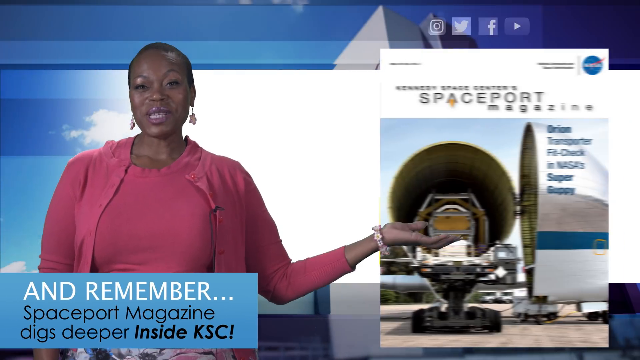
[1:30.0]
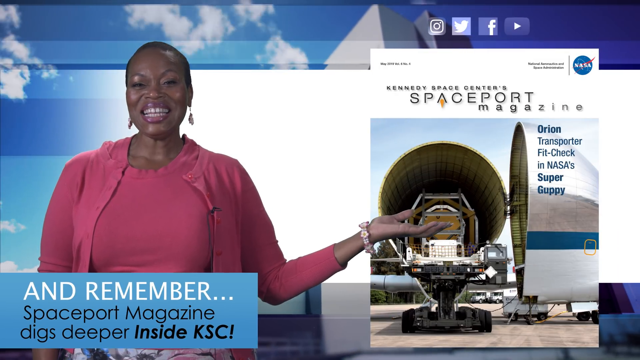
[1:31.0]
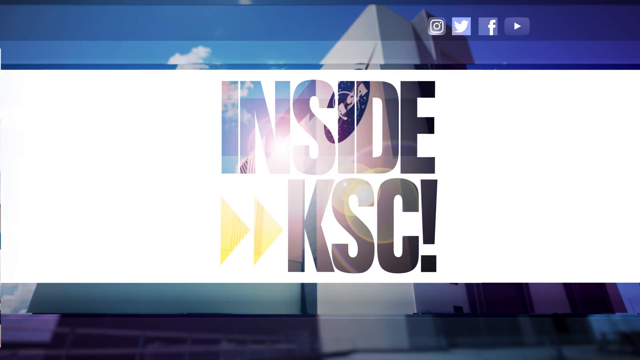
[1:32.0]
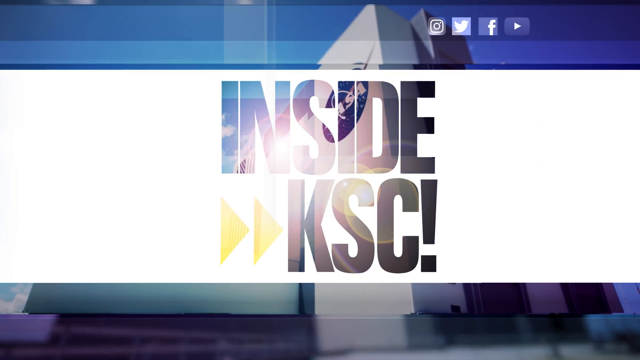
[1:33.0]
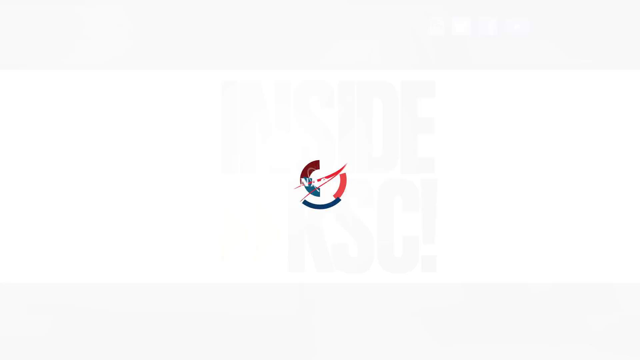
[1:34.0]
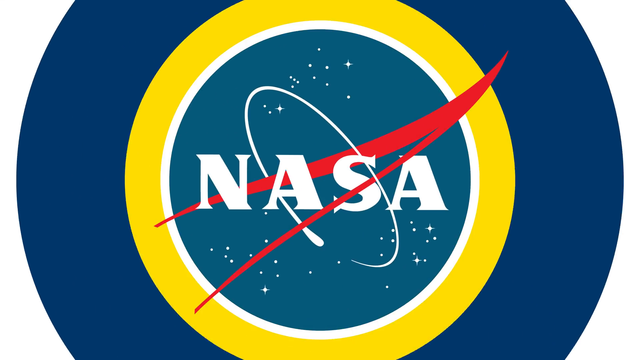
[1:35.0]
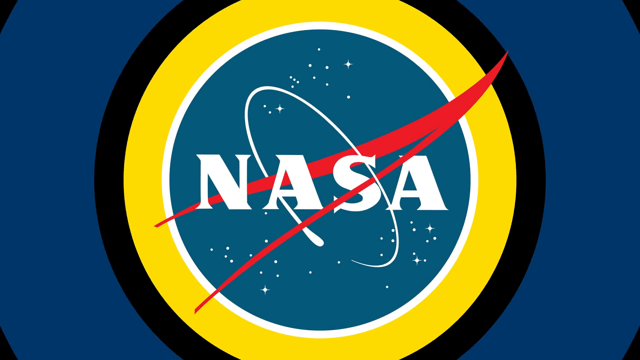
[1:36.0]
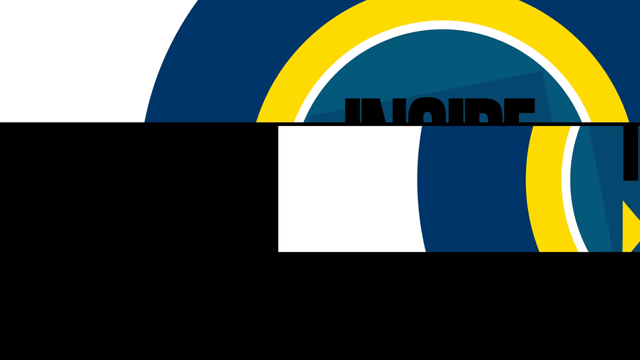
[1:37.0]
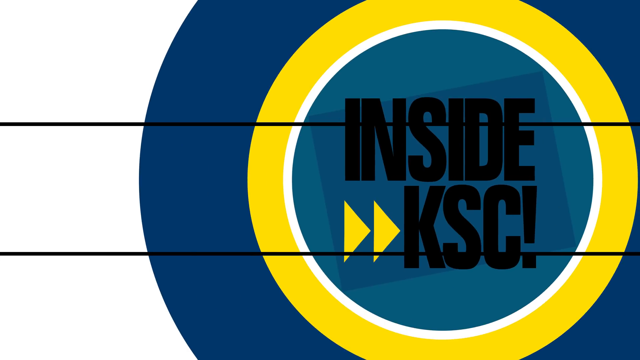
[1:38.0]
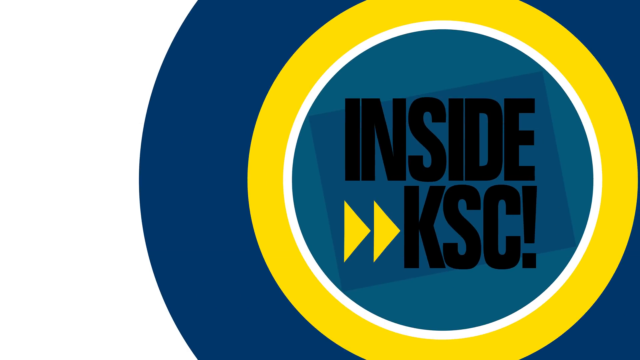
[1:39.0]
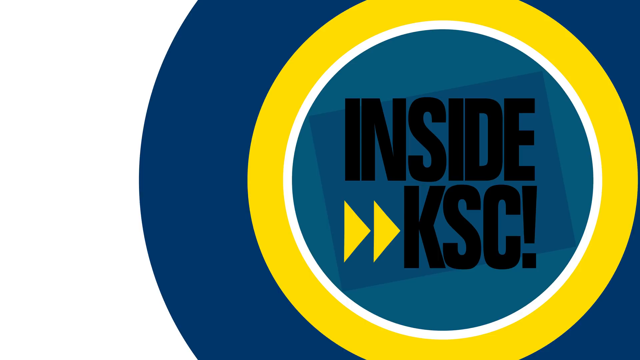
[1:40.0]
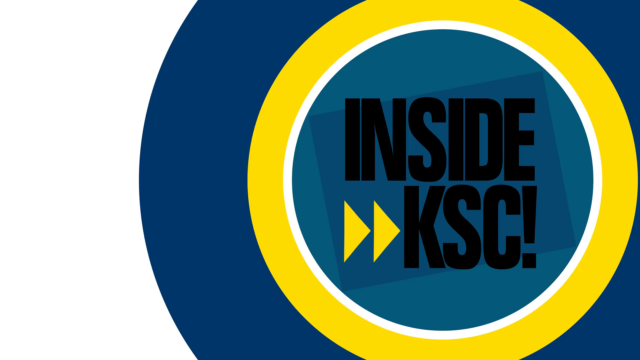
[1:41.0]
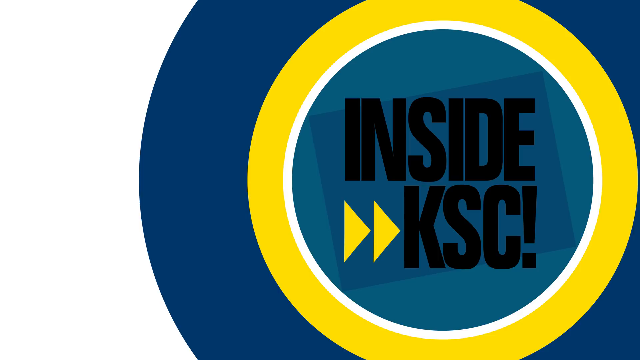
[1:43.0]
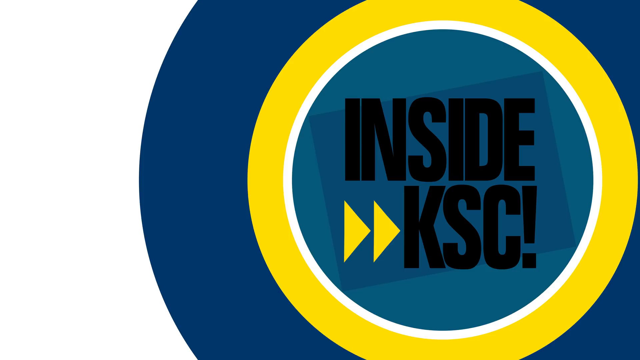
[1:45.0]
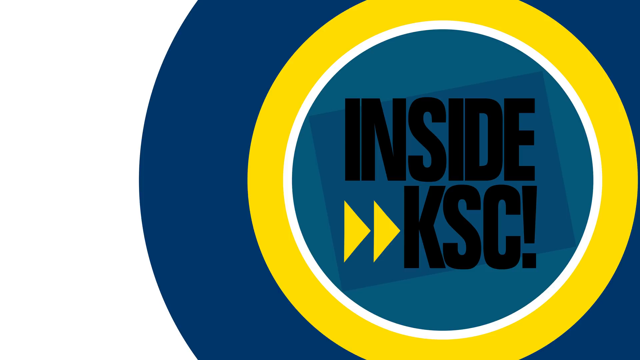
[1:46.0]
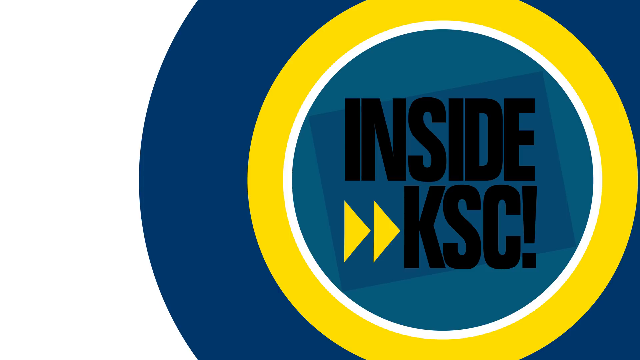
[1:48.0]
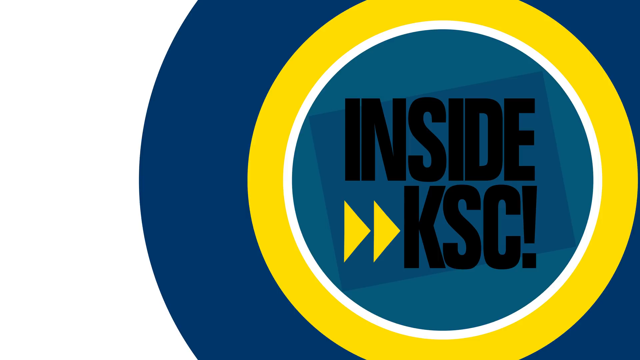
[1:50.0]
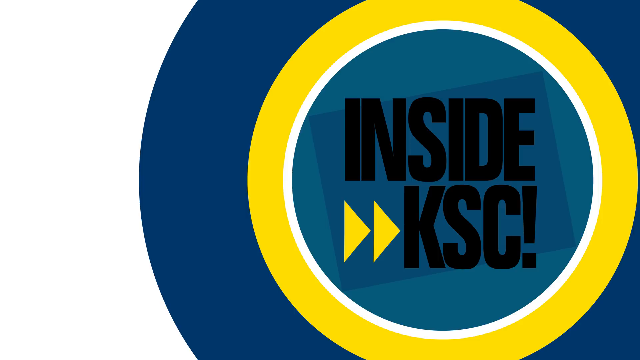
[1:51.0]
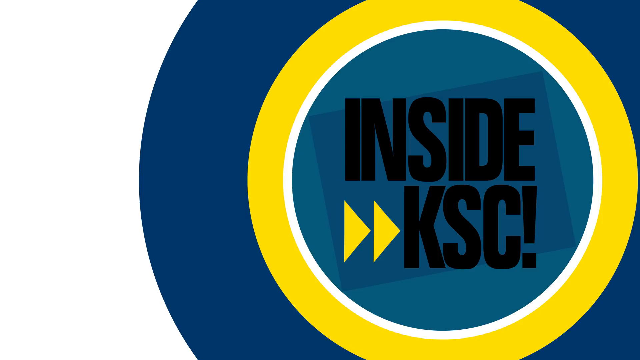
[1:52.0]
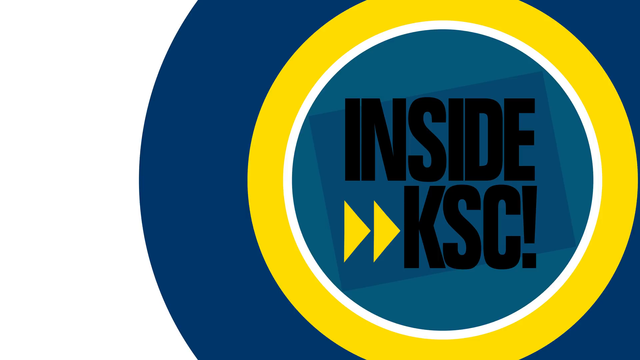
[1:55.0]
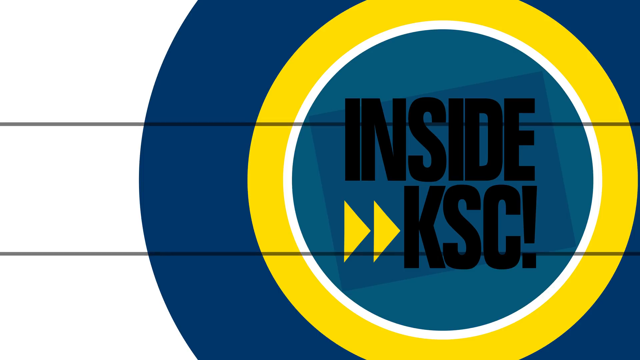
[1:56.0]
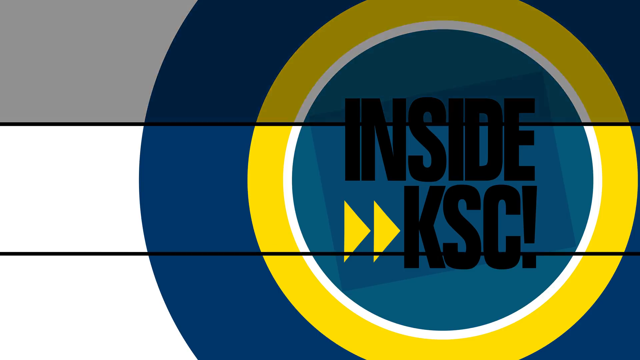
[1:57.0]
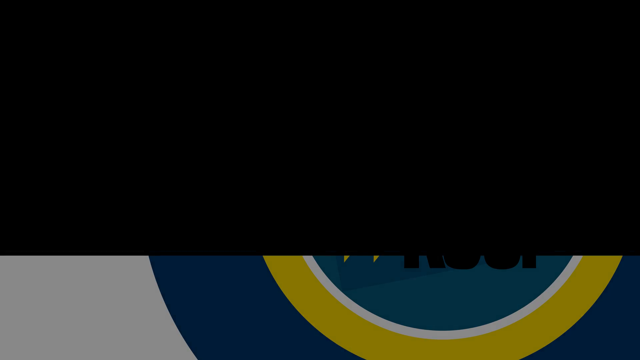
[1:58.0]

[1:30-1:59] The opening screen returns briefly, with the woman in pink talking. Her left arm is extended out to her left, slightly bent at the elbow. On the right, instead of the NASA building, is what looks like the front page of a NASA magazine, or a poster, referring to the Kennedy Space Center's Spaceport Magazine, with the NASA logo on its upper right. This slides around and away, and "Inside KSC!" appears in all caps with the exclamation point at the end. More digital visuals follow. The NASA logo builds from small to large: a kind of target shape with "NASA" in the middle and blue and yellow circles in its bullseye. Then the Inside KSC logo appears, with a blue outside, a yellow inner rim, a thin white rim, and a light blue rim with "Inside KSC!" in the middle. It is off center to the right of the screen and cut off on the top, bottom and right, so the full bullseye is not visible. The image freezes on it for several seconds, and then the video fades to black.